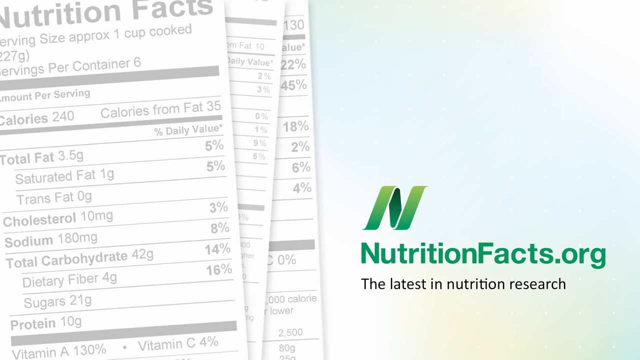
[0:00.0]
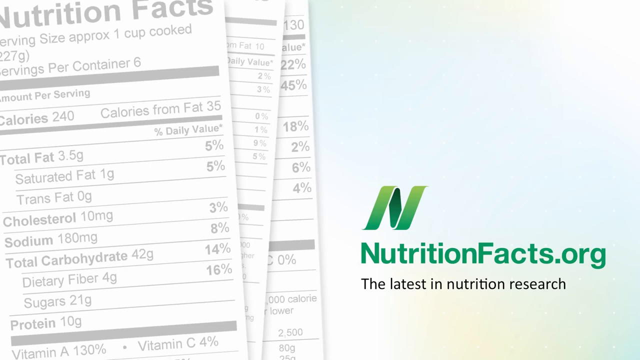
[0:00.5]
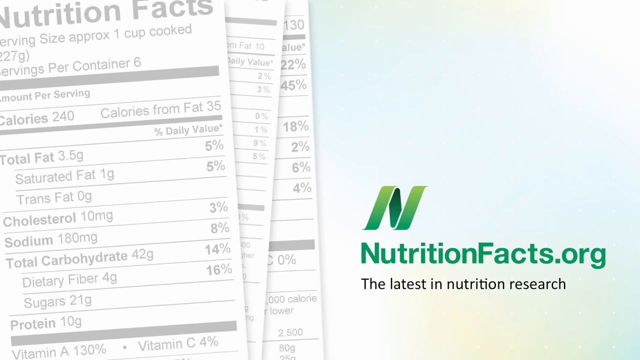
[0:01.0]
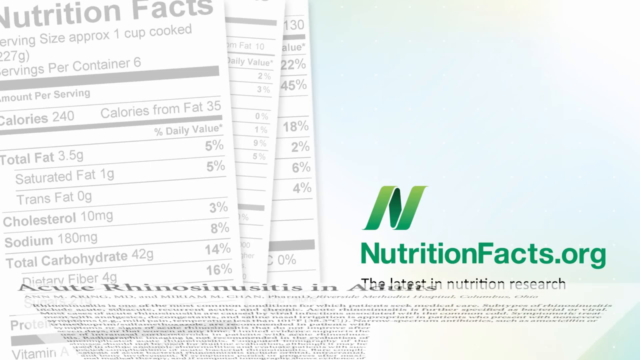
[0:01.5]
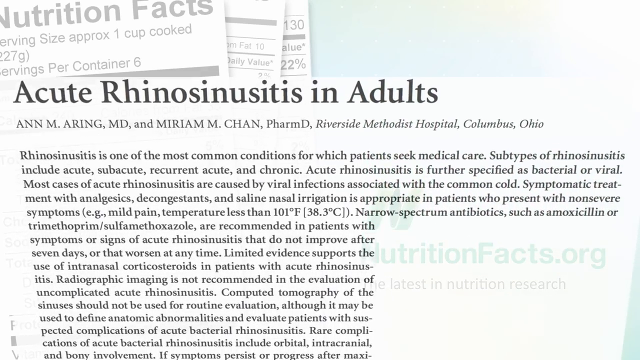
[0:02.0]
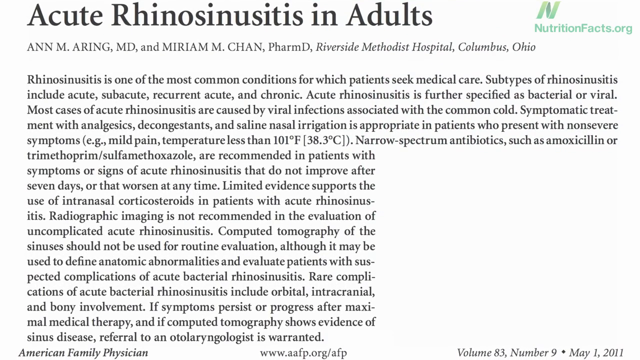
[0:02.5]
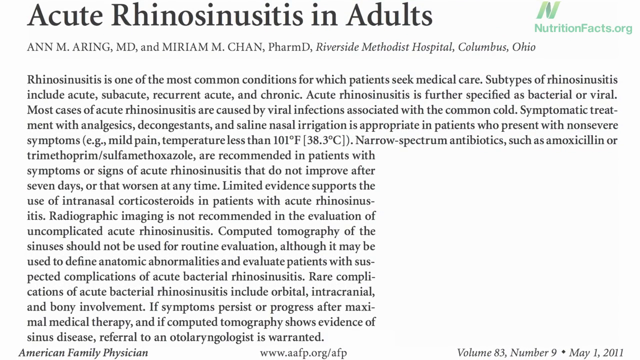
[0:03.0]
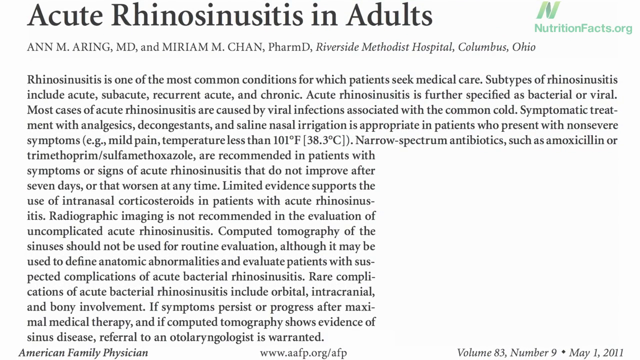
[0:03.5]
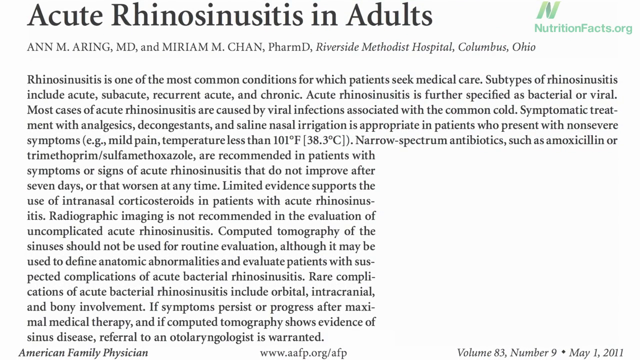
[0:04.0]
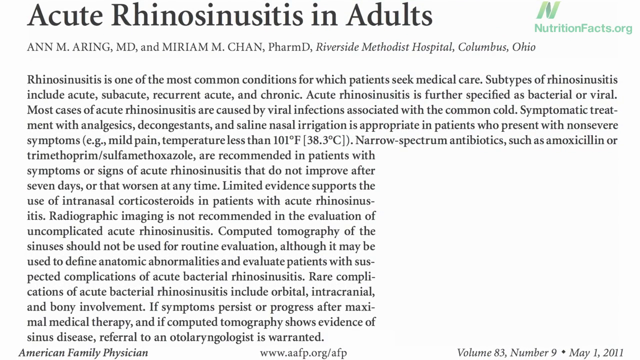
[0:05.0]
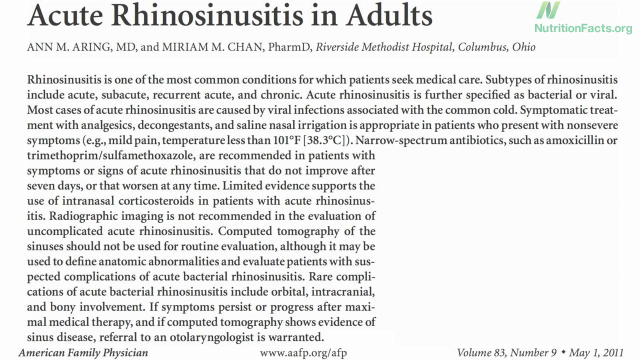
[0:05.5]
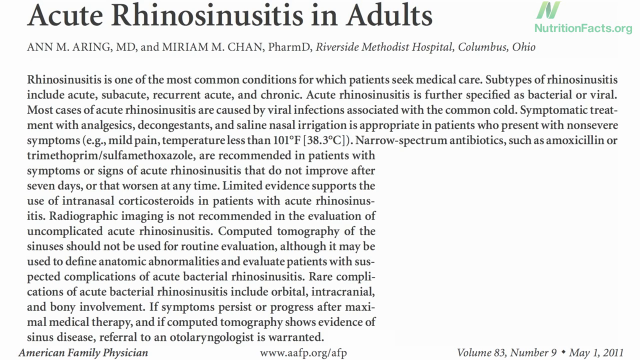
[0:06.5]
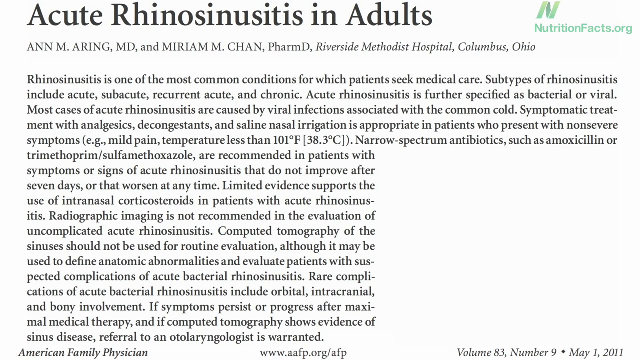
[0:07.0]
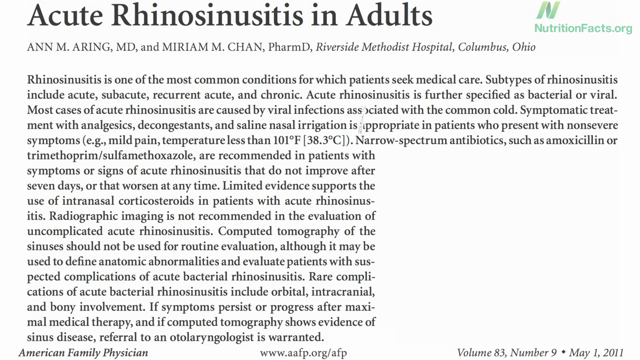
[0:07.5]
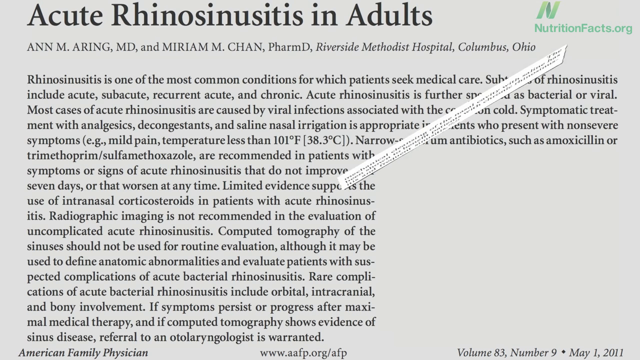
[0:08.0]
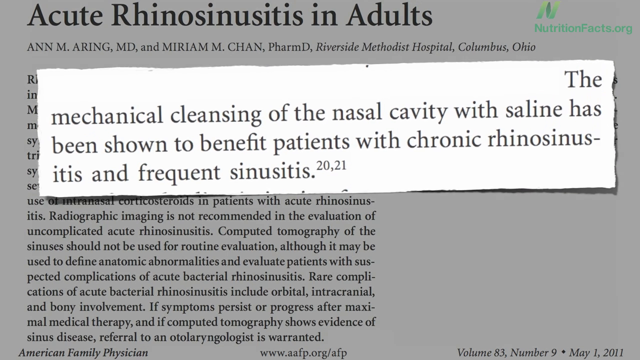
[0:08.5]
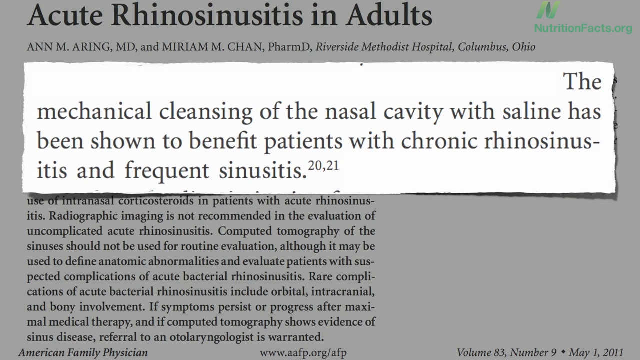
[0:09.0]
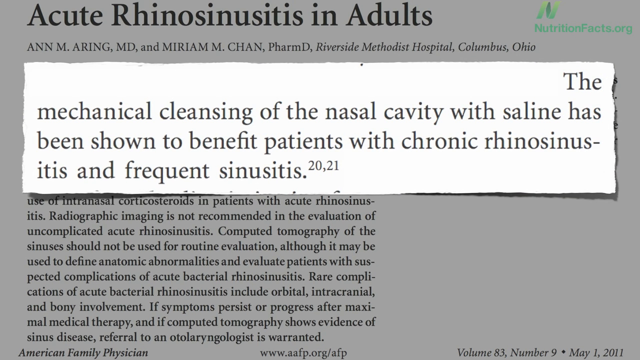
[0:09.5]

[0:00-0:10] On the left side of the background is a copy of a Nutrition Facts label showing the serving size, calories, fat, sodium and a table listing. On the right side is an N, the logo for Nutrition Facts, and in green is the text "nutritionfacts.org, the latest in nutrition research". After this screen is shown briefly, a news article slides up from the bottom. Its title is "Acute Rhinosinusitis in Adults". The article has no images; it has a white background and black text, with an empty spot in the lower right corner that looks like a place where an image once was or will be. After a few seconds, a clipping appears to spiral onto the screen from the background. The clipping is also white with black text and states that mechanical cleansing of the nasal cavity with saline has been shown to be beneficial to patients.